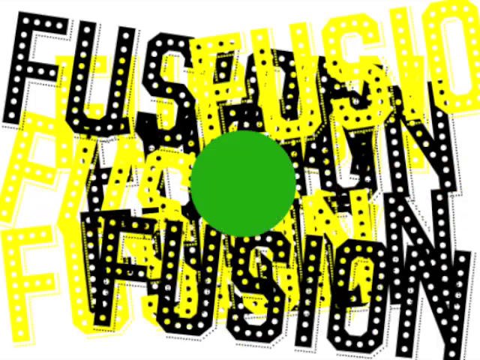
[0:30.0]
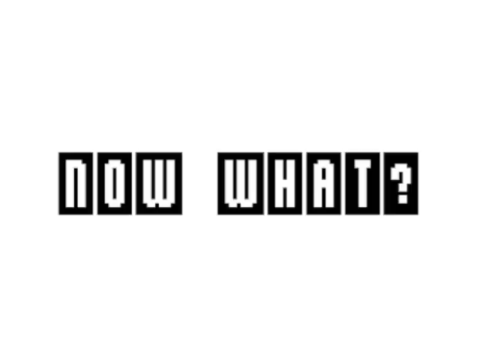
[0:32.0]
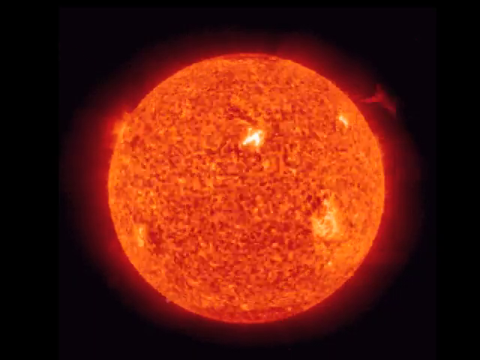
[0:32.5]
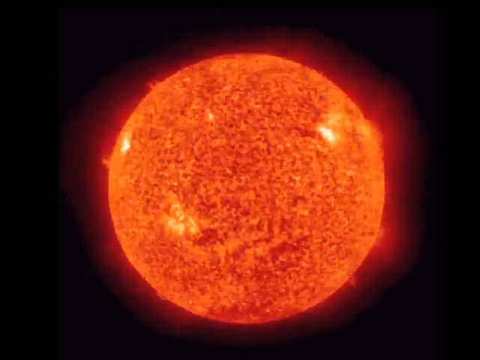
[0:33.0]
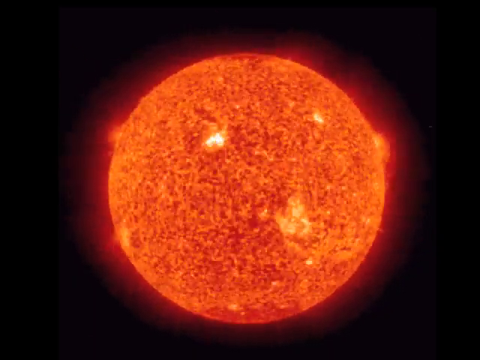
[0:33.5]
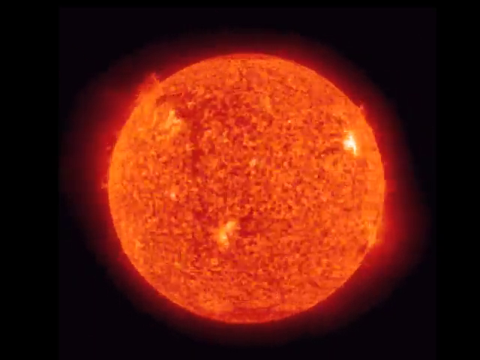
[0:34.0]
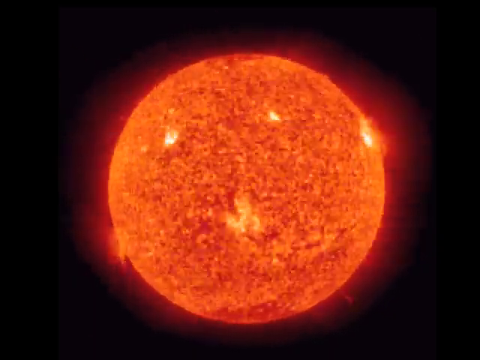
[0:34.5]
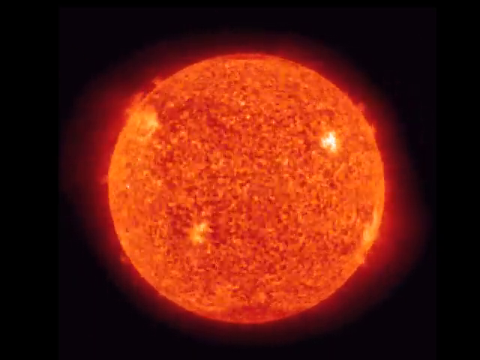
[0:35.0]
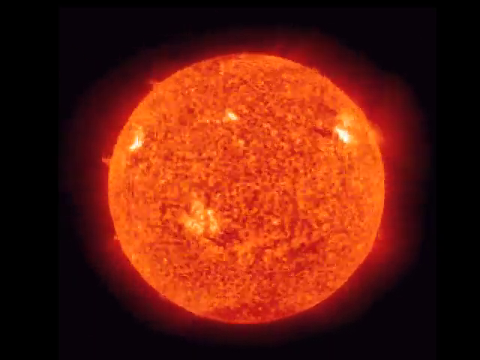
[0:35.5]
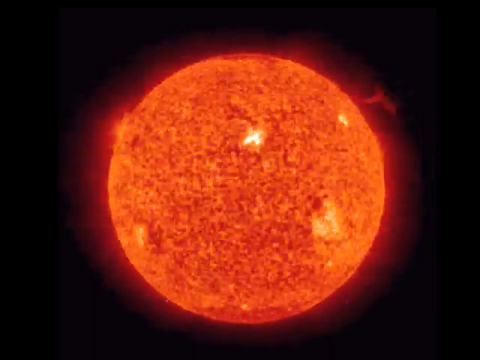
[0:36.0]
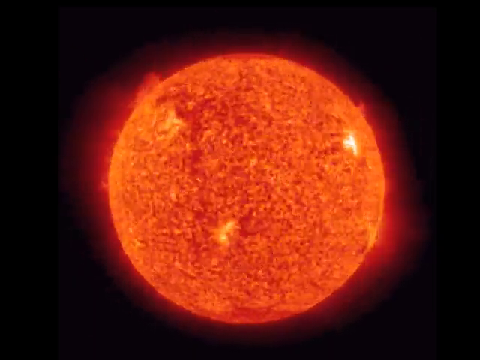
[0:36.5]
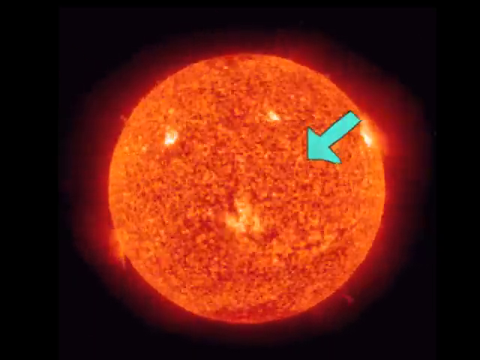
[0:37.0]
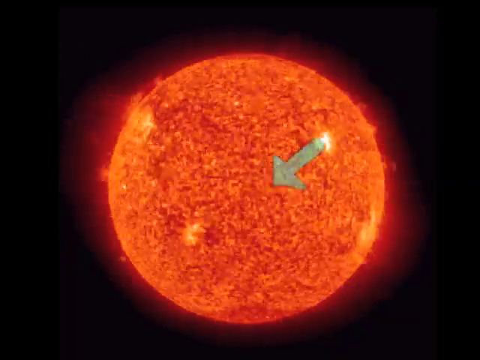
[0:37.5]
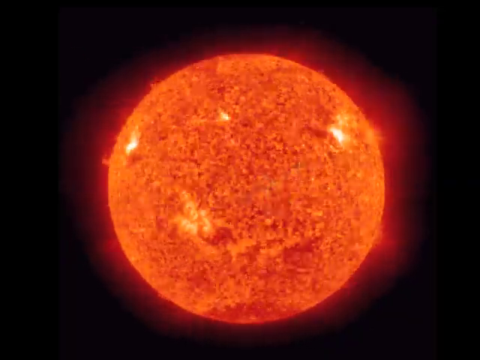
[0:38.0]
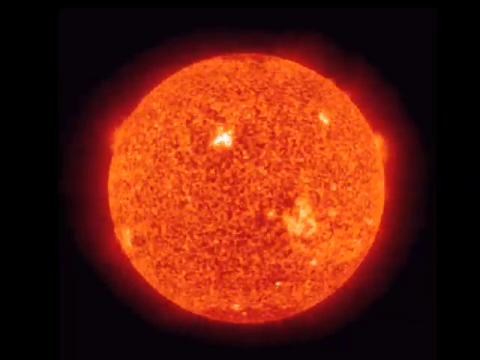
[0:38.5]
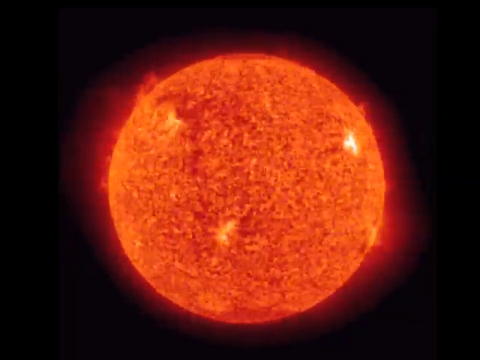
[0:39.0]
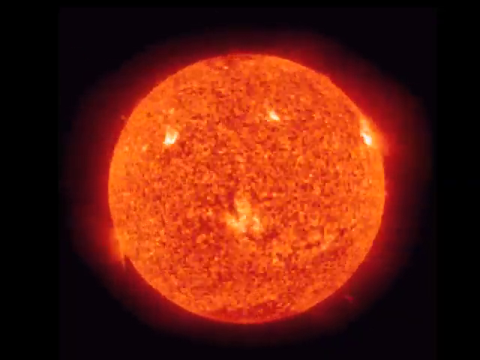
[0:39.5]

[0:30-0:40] The word "fusion" is everywhere in black and yellow, and a green ball comes up in the middle. It disappears, and the text "now what?" appears in white font even though the background is white, with each letter on a rectangle. The background then turns black, and a yellow and red circle that looks hot spins around and around with a tail. An arrow goes diagonally from the right side to the left, pointing at a spot, then the same arrow goes up diagonally towards the right.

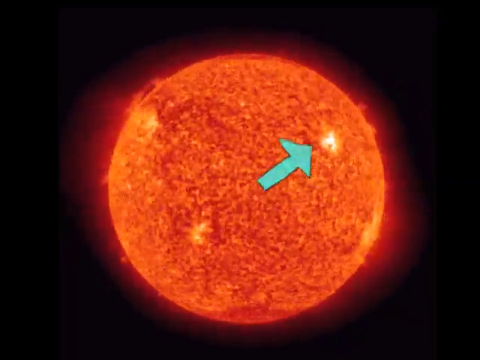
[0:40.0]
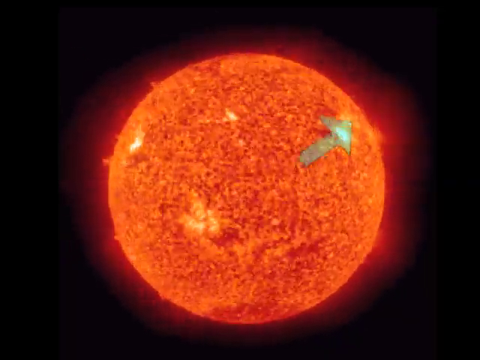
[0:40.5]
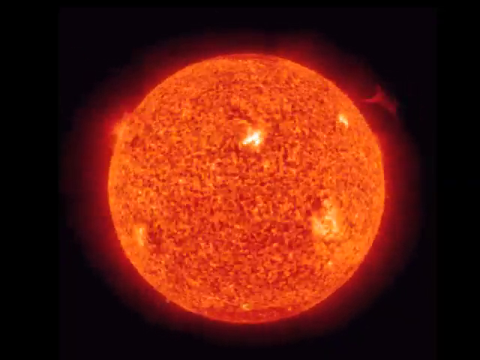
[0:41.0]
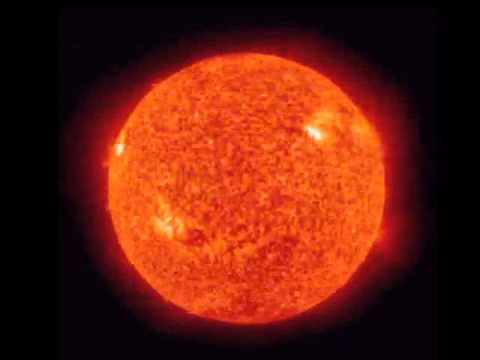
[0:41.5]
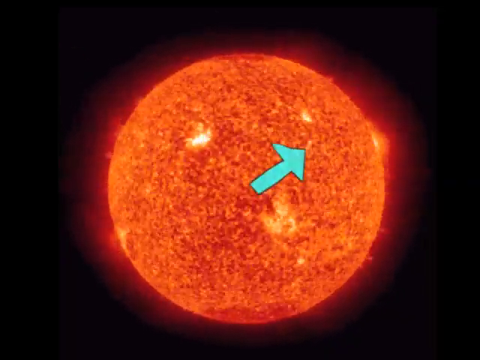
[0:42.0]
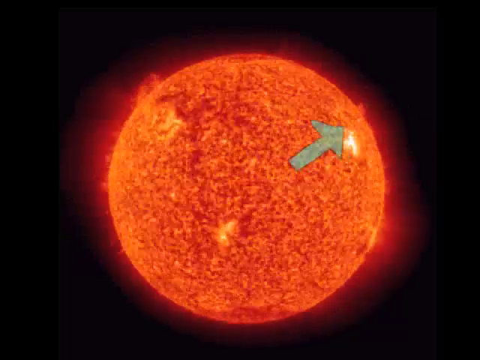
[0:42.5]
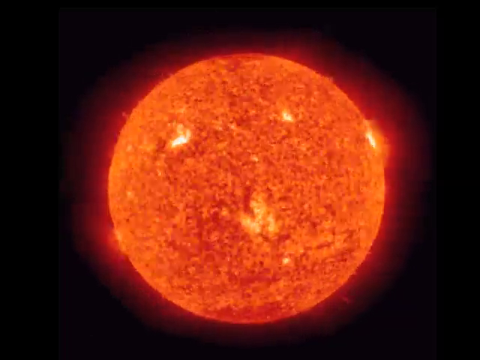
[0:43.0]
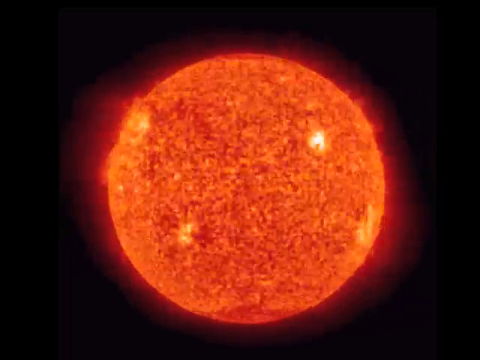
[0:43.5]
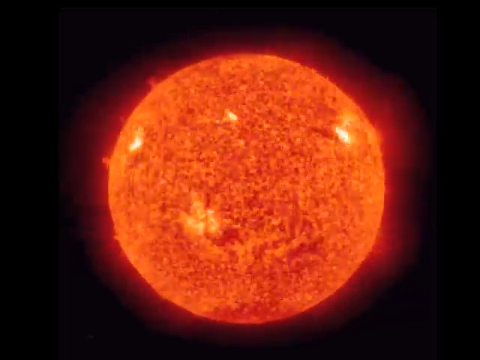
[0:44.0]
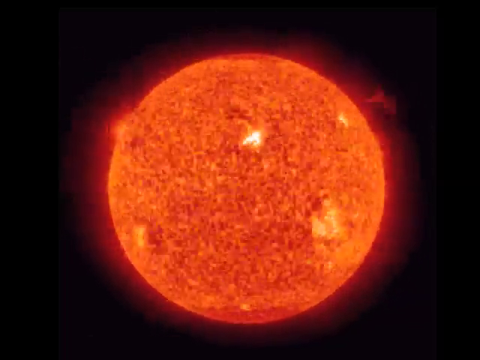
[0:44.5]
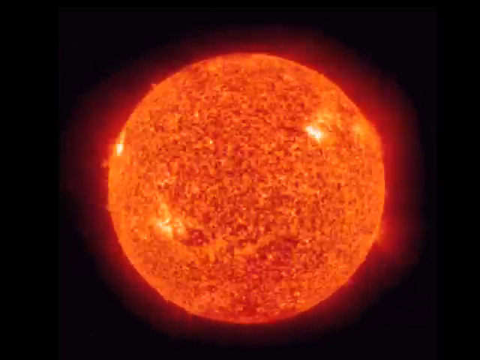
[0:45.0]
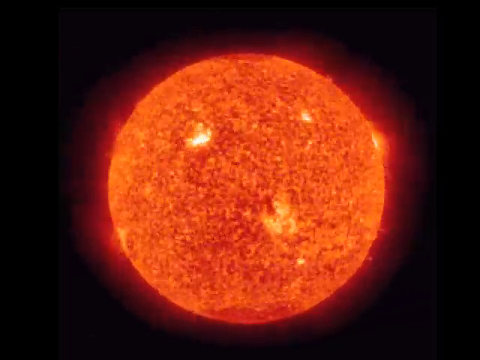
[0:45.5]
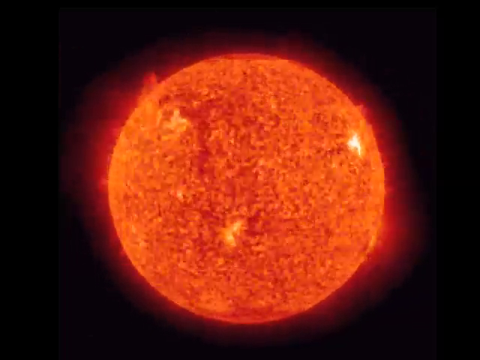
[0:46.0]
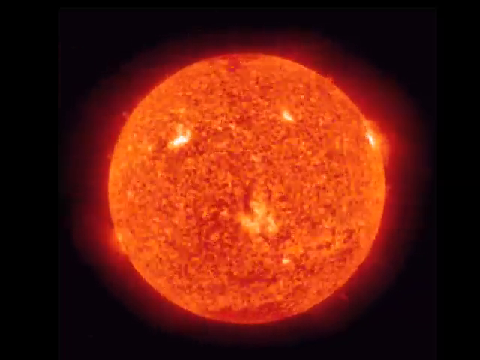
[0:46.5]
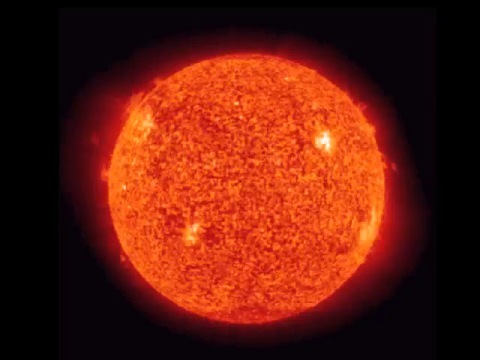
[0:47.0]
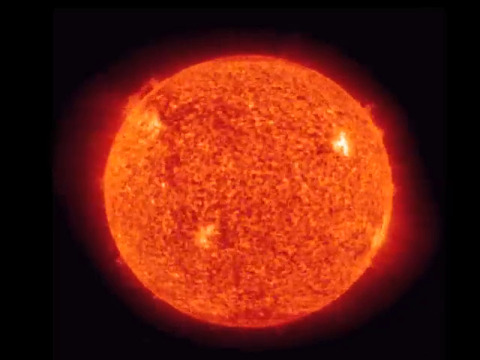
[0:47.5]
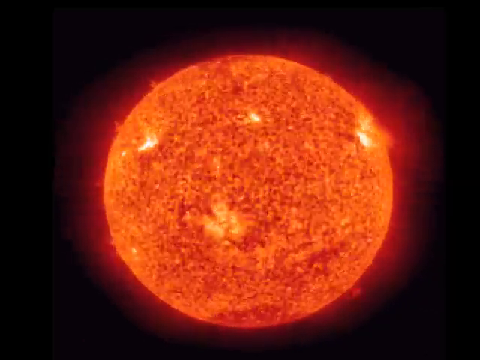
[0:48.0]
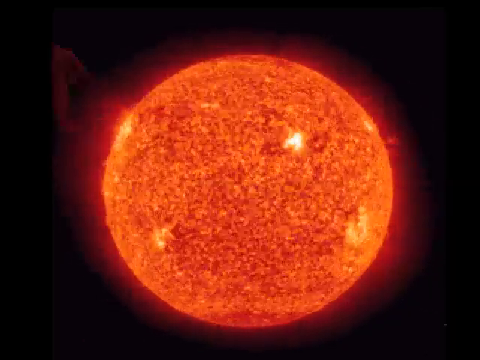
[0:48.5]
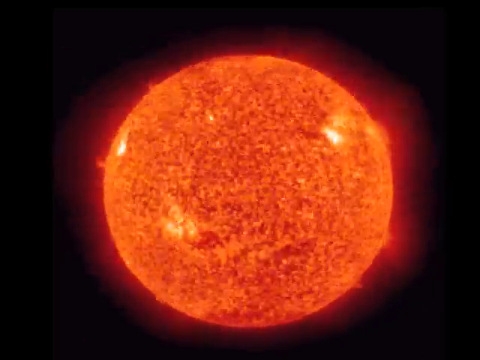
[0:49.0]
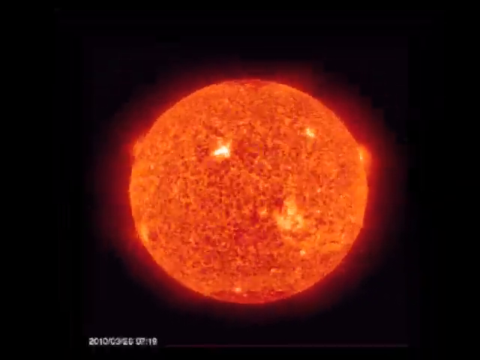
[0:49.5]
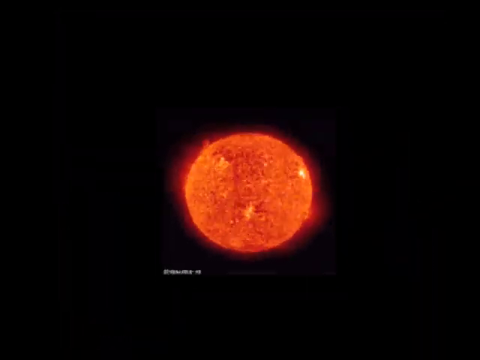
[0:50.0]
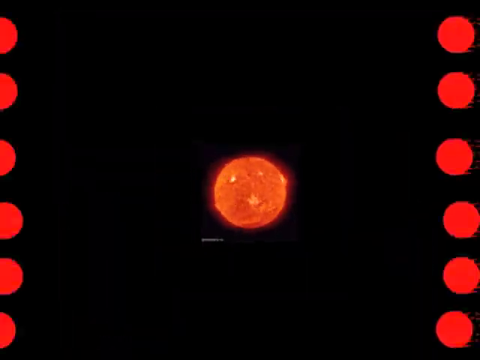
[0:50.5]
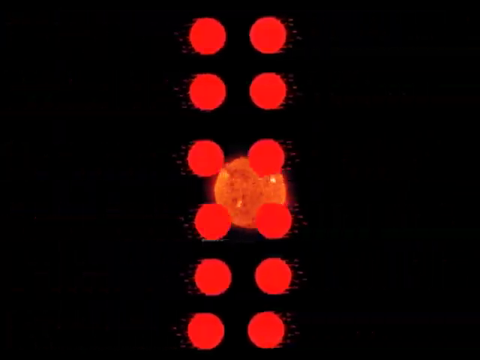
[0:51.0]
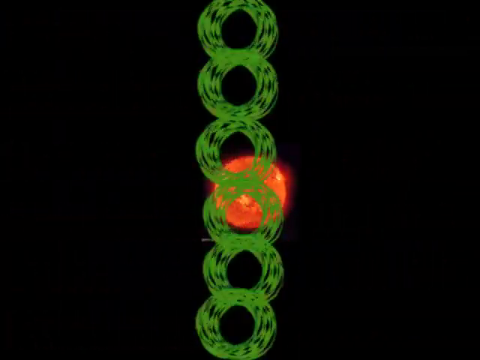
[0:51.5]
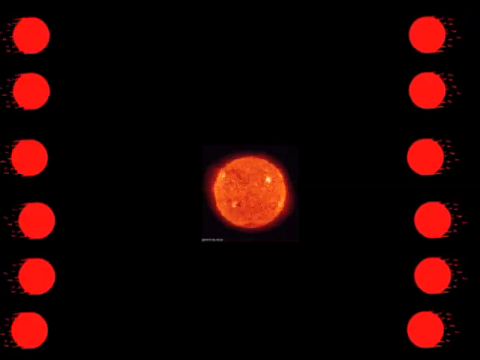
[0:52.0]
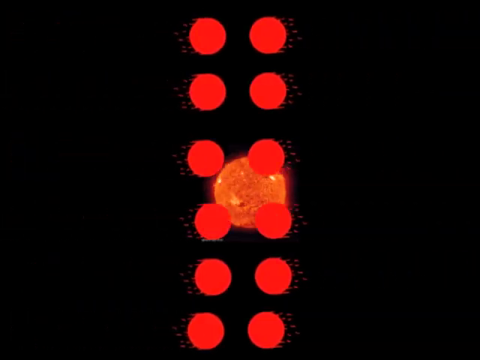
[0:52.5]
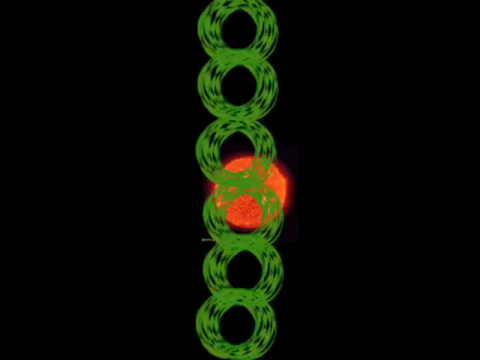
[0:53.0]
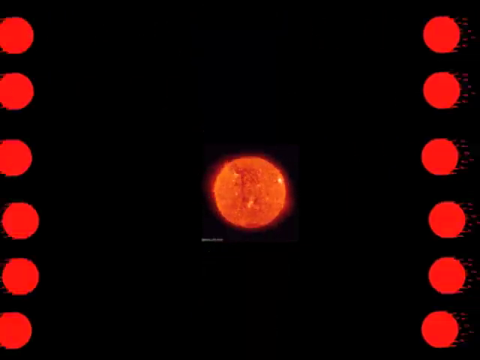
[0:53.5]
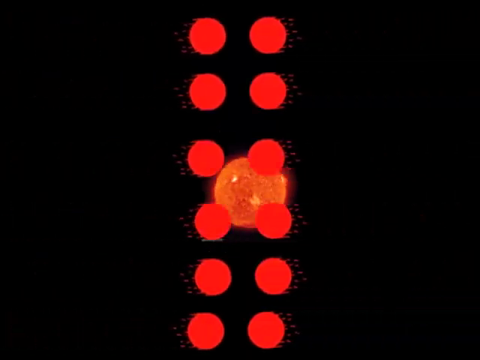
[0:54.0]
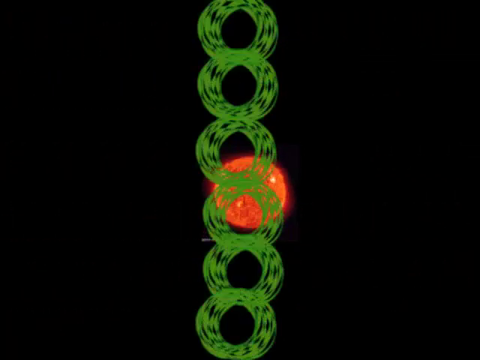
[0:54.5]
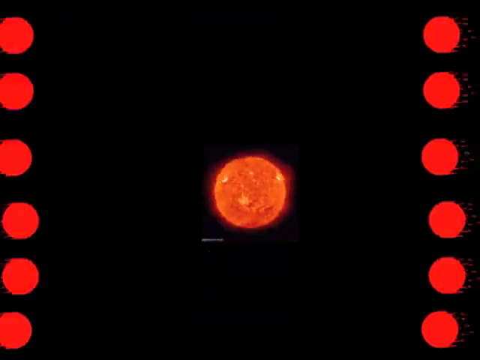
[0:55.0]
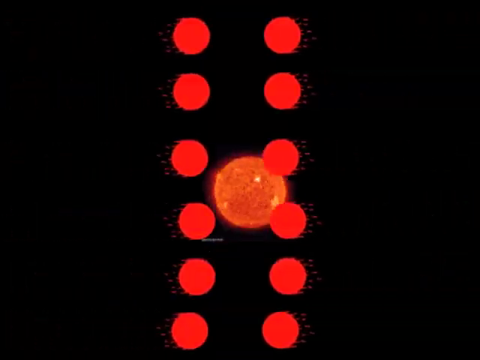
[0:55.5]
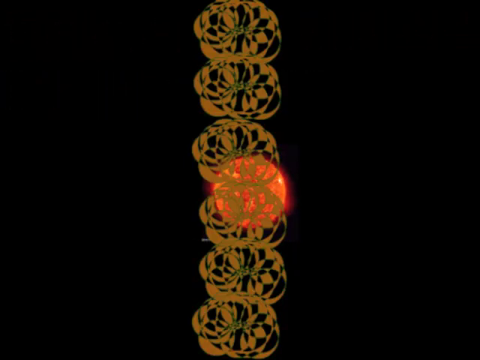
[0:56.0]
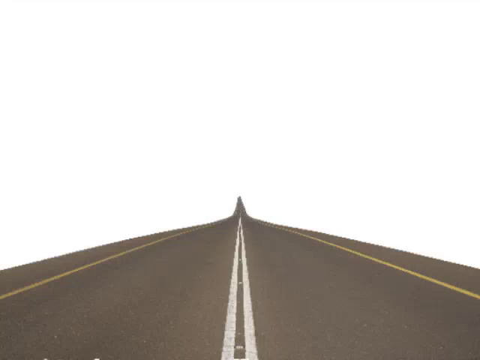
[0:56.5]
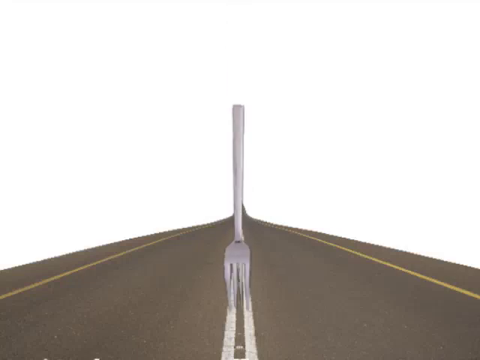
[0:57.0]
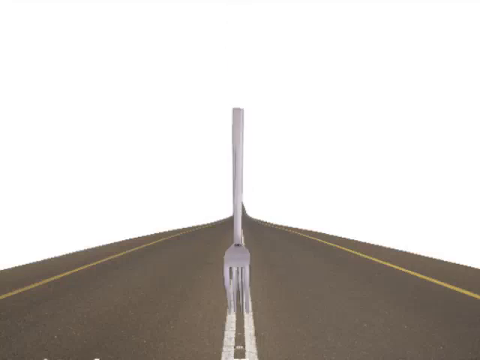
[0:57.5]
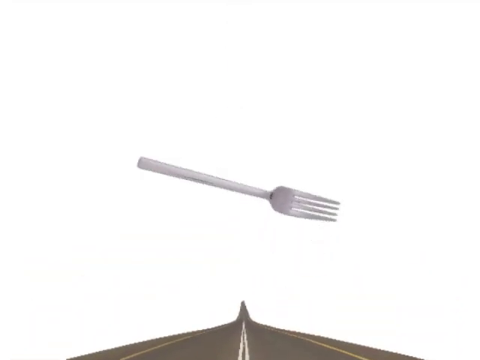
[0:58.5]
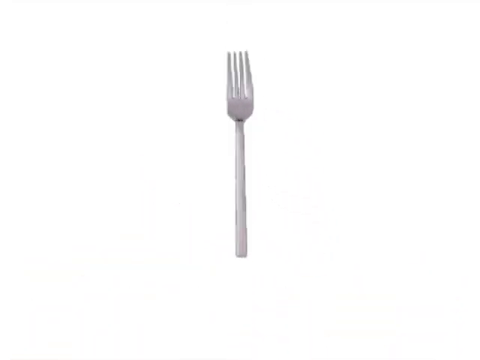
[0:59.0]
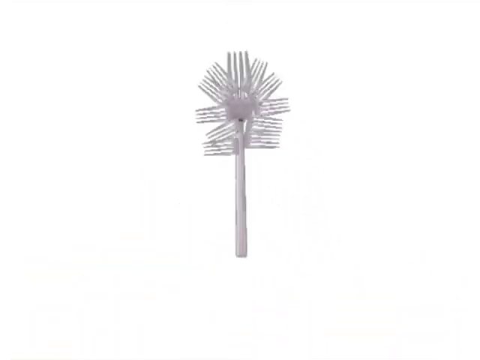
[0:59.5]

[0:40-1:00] The circle looks super hot, a reddish-orange colour like hot Cheetos. A tail arrow goes from the left side pointing up towards the right side, toward a spot at the end that is a bright light on the circle. The circle keeps spinning, and the arrow comes again, possibly pointing to another spot; it moves so fast it is hard to tell whether it is the exact same spot. Then a metallic fork appears in the middle of a road.